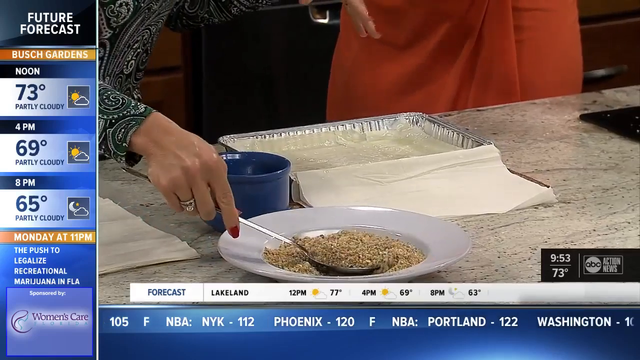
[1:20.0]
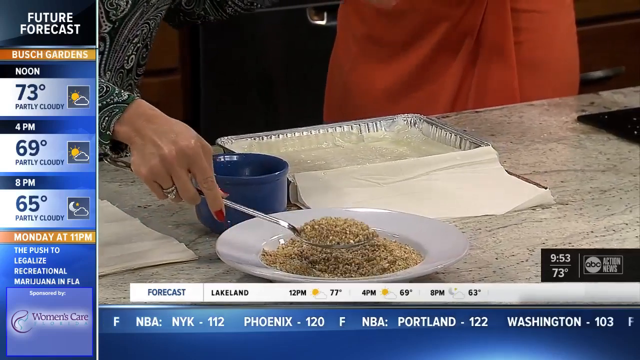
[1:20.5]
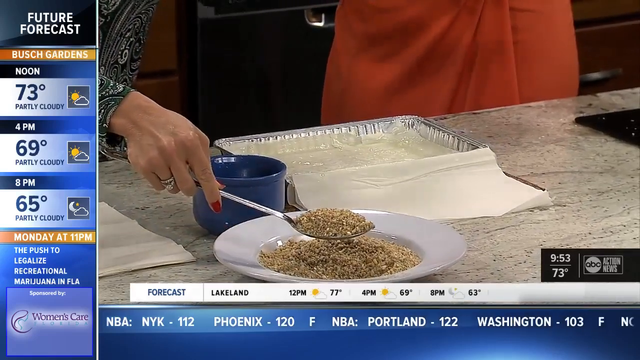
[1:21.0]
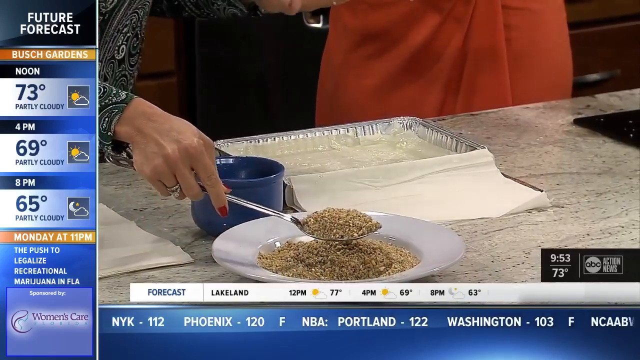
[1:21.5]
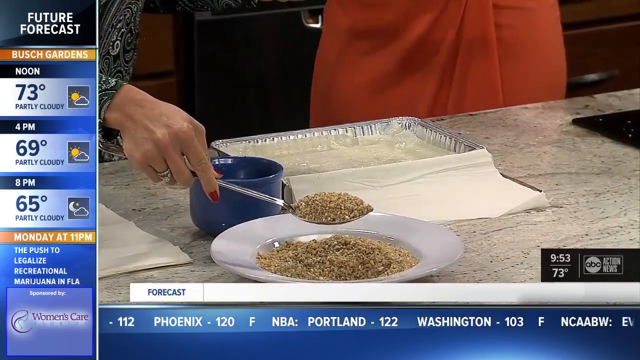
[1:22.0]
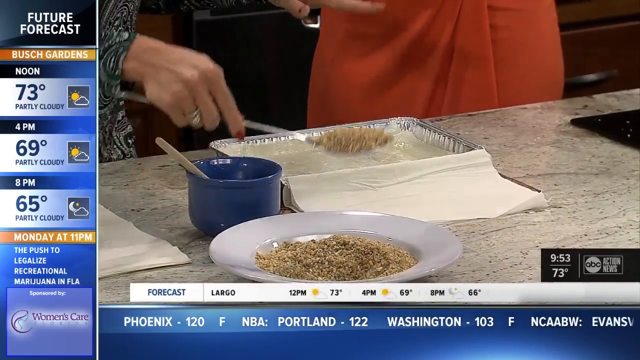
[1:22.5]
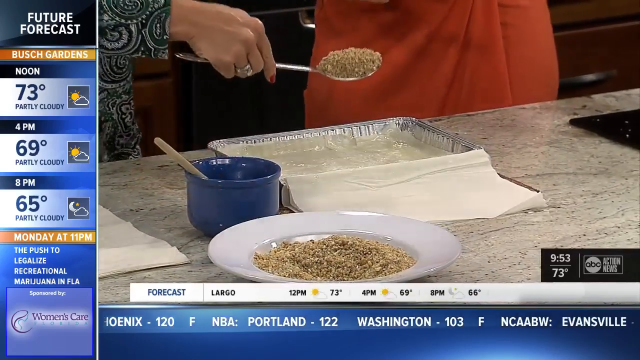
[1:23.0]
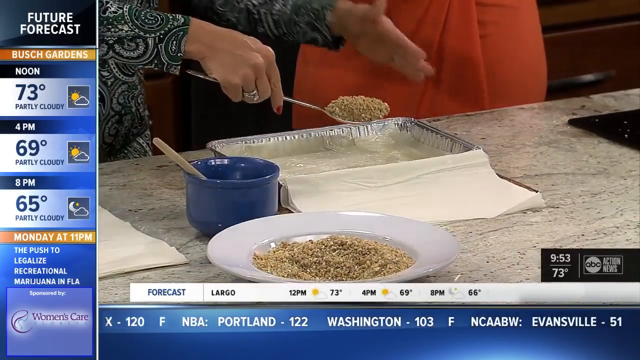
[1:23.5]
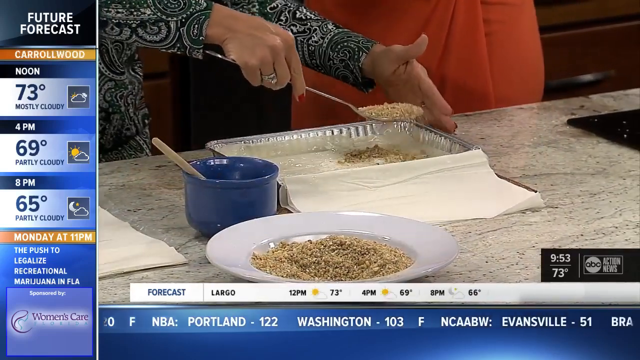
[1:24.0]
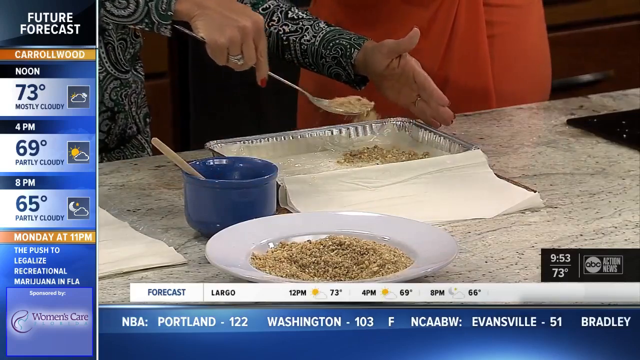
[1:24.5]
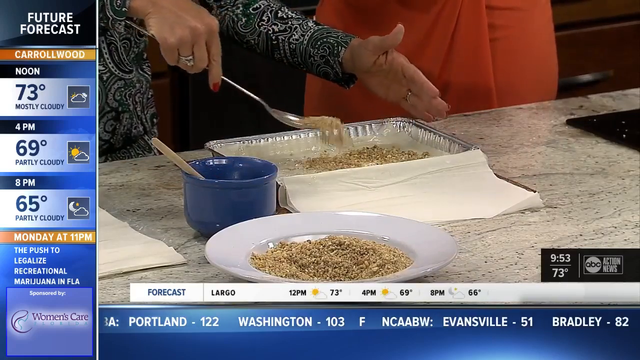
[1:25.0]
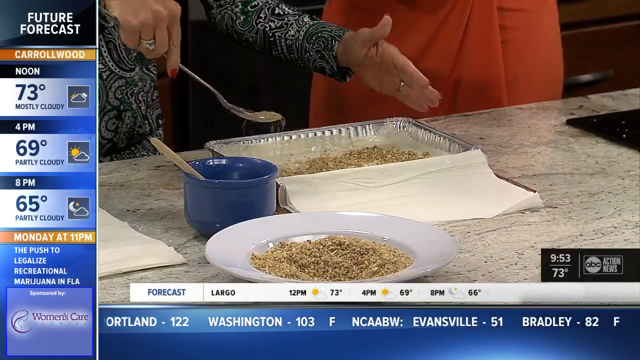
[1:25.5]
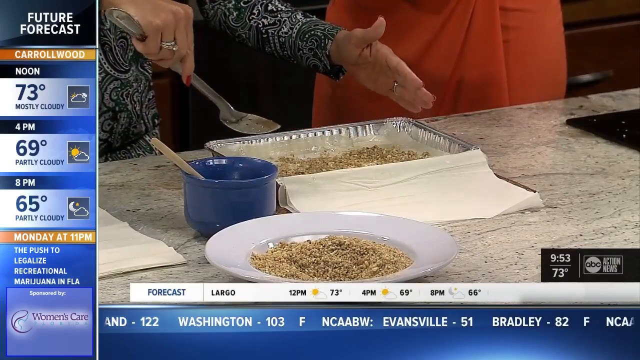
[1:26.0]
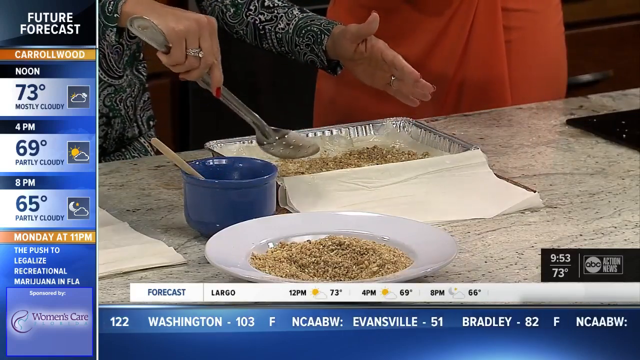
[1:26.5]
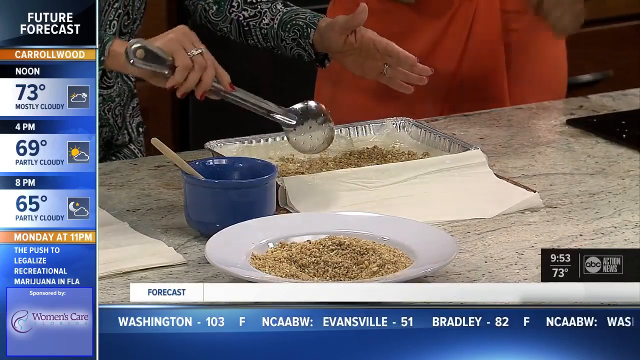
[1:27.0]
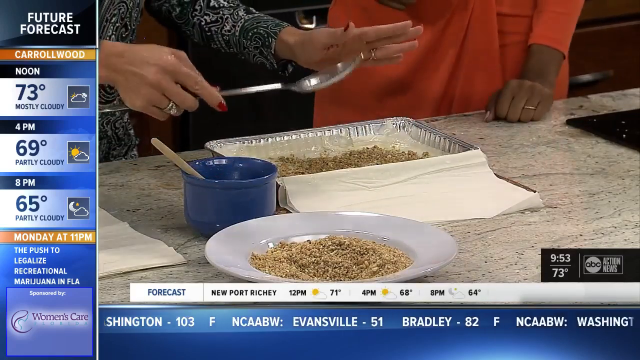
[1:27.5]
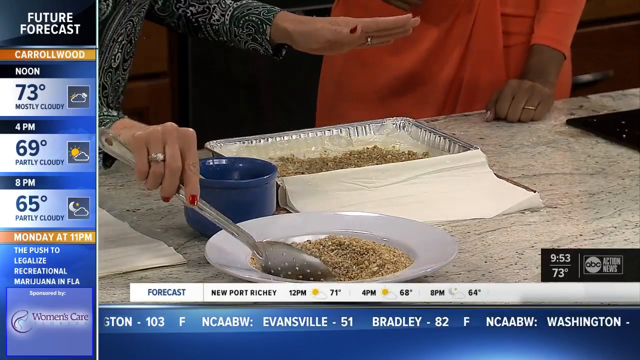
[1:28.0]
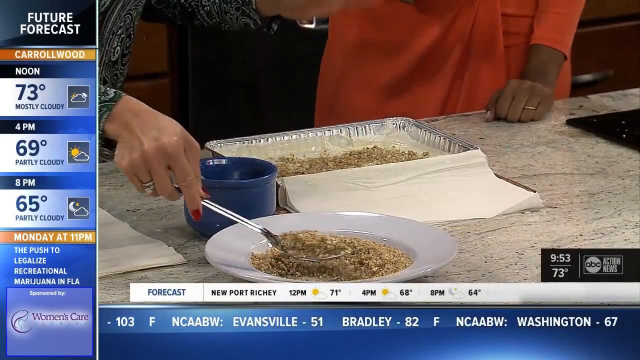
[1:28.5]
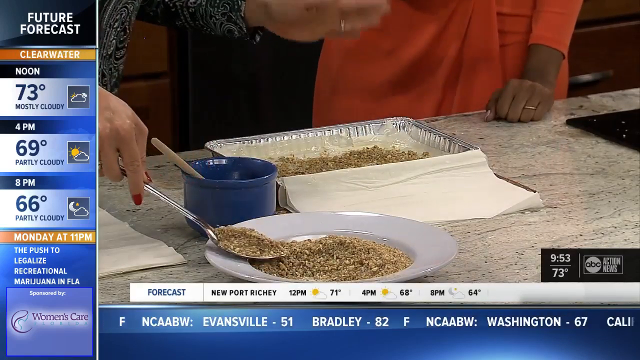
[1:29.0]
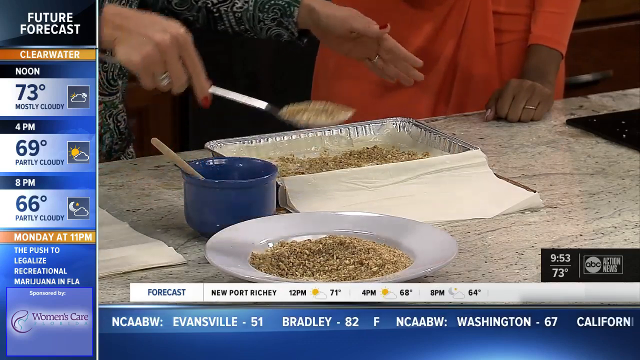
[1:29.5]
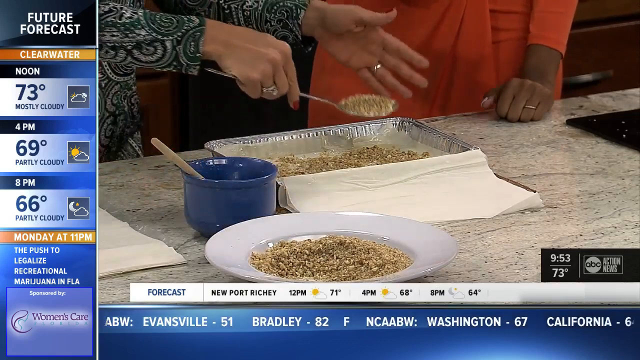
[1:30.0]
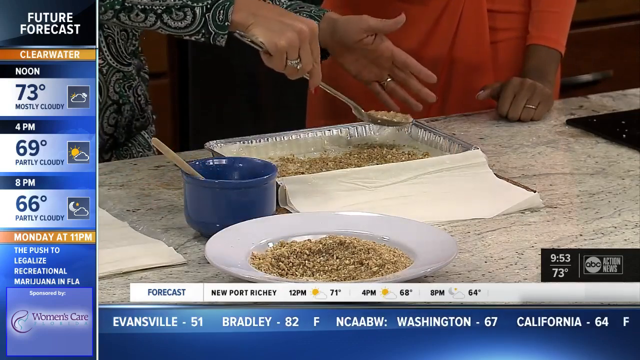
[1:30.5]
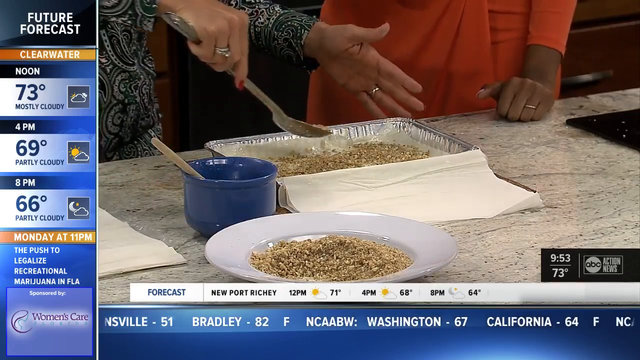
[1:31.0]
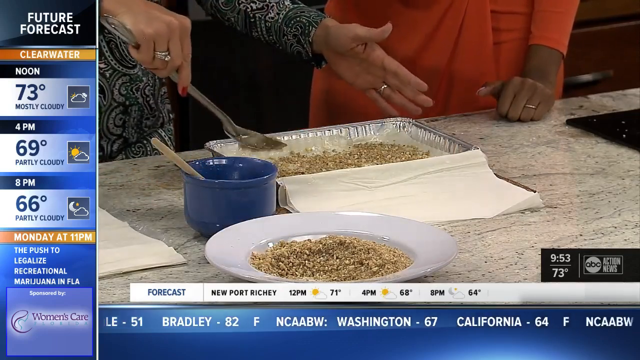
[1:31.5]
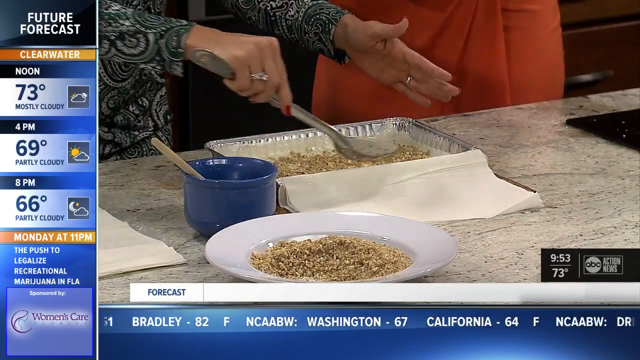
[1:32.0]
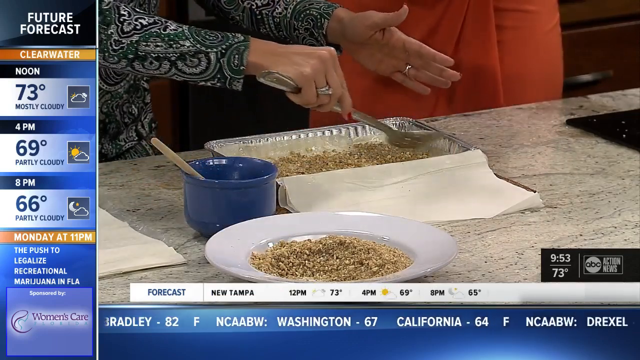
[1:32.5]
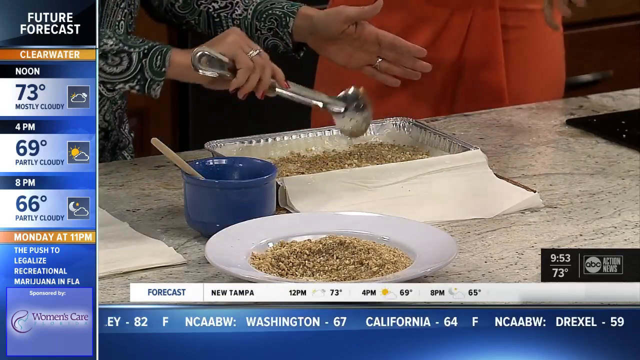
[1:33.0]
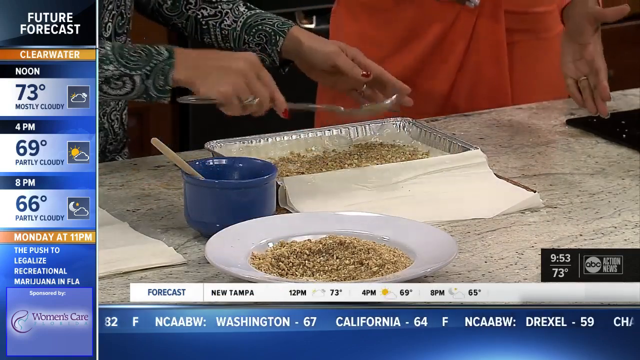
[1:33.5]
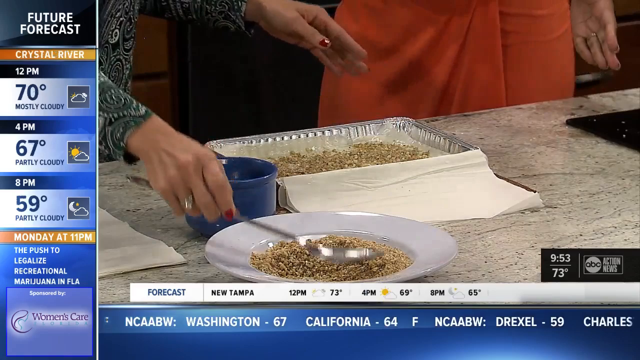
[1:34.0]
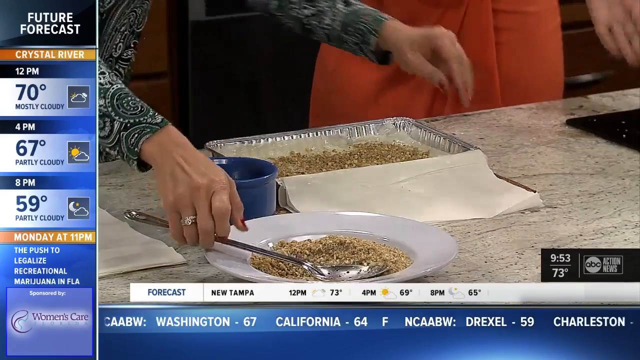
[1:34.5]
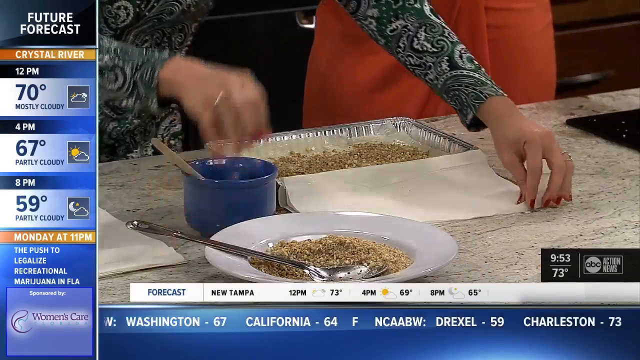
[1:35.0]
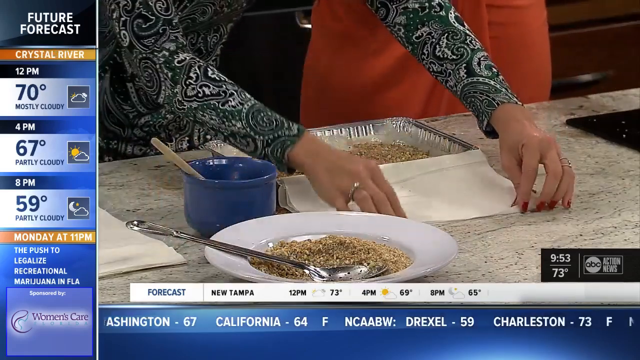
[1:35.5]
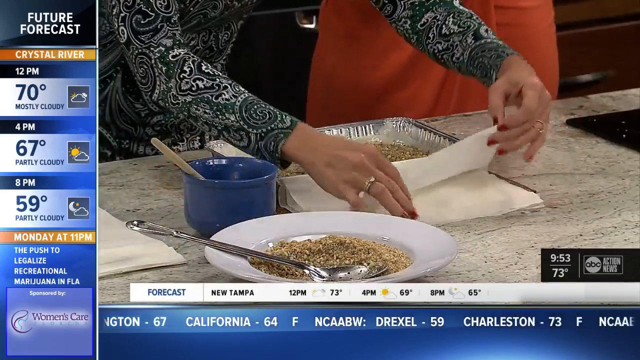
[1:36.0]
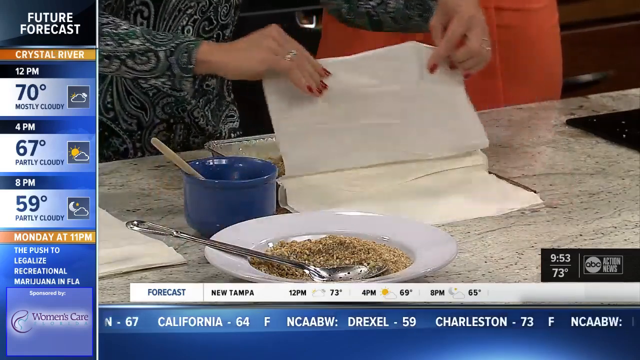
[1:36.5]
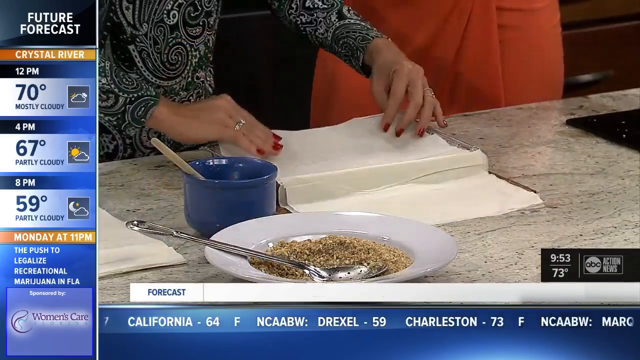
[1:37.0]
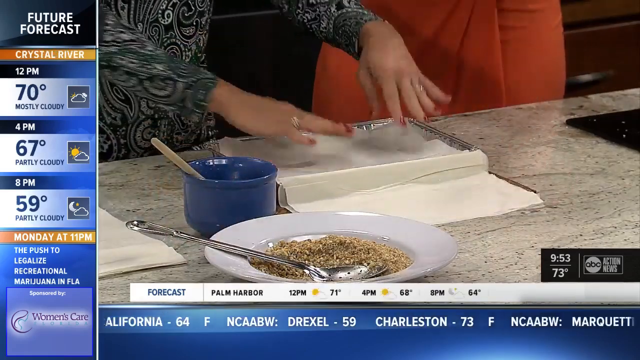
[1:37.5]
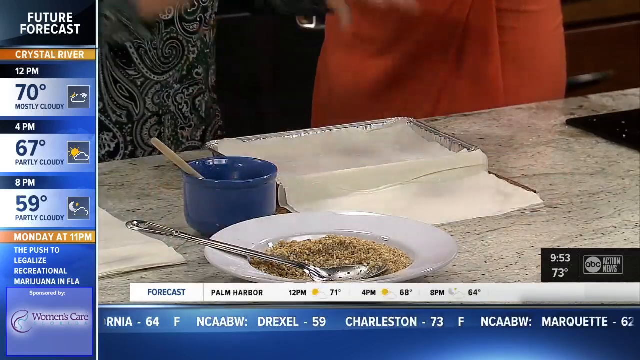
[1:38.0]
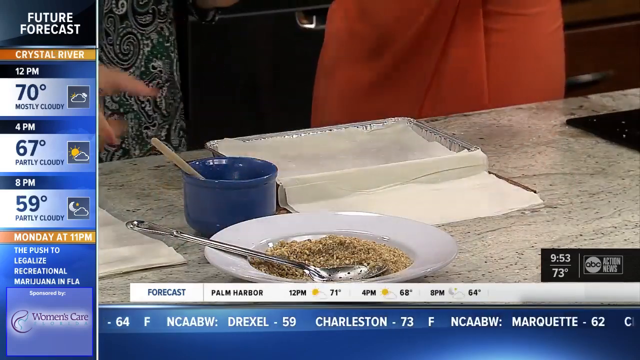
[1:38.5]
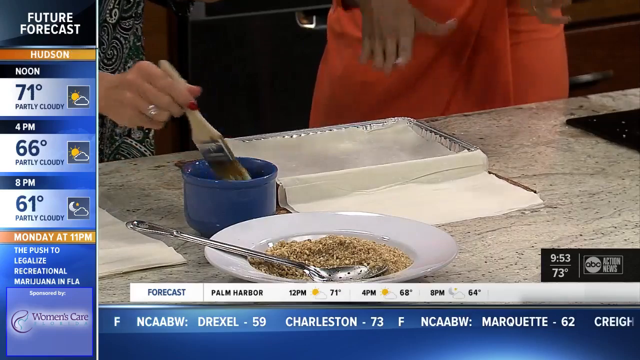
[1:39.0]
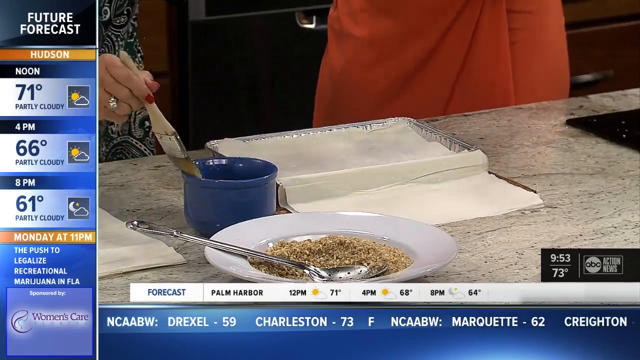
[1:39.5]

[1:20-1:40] The woman grabs the spoon. Her ring, on her right hand, comes into clearer focus; there appear to be two rings, maybe a wedding band and an engagement ring. On the right side the time reads "9.53", with "73 degrees" underneath and "ABC Action News" next to it. Along the bottom is NBA information with Phoenix, Portland and Washington scores. The woman sprinkles some of the filling onto the pastry. The pastry pan is a long rectangle, maybe about a foot and a half long and half that in width. She folds over one of the pastry sheets, bringing up another layer, butters it, and then lays down the filling, holding her left hand up, apparently to help with the filling.